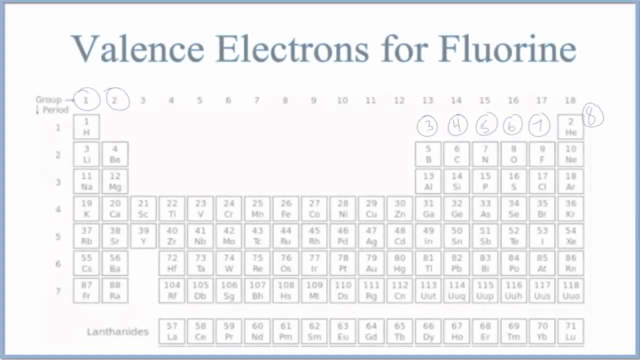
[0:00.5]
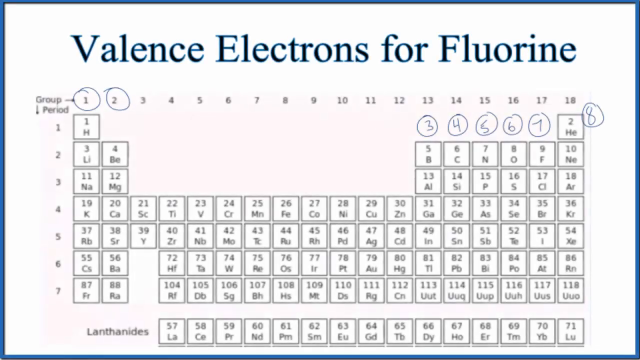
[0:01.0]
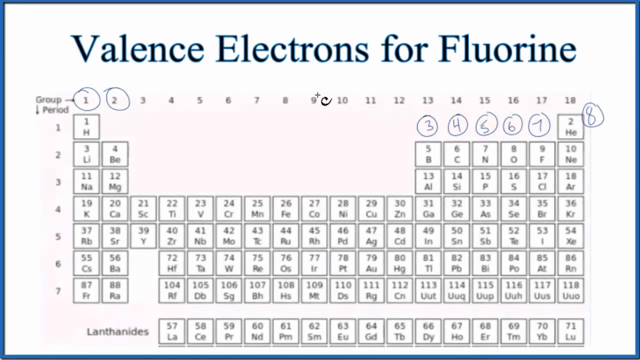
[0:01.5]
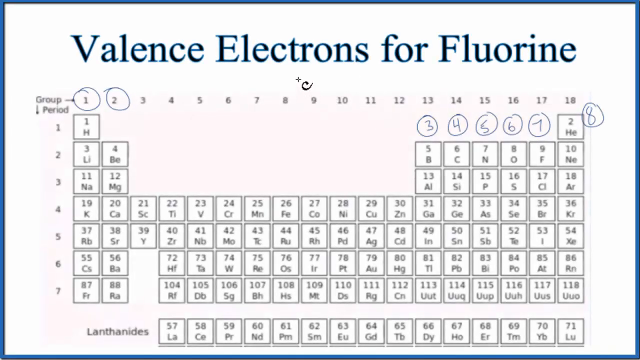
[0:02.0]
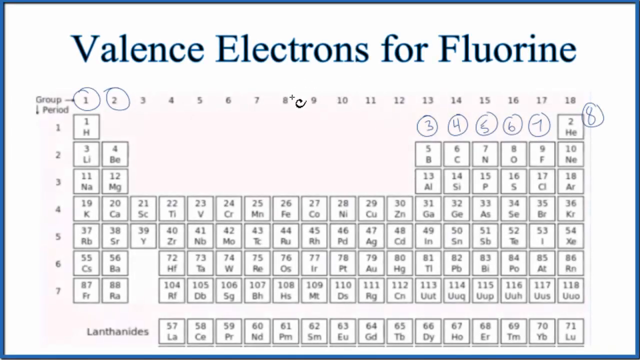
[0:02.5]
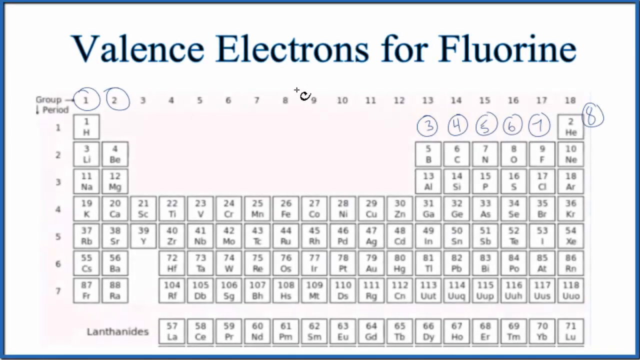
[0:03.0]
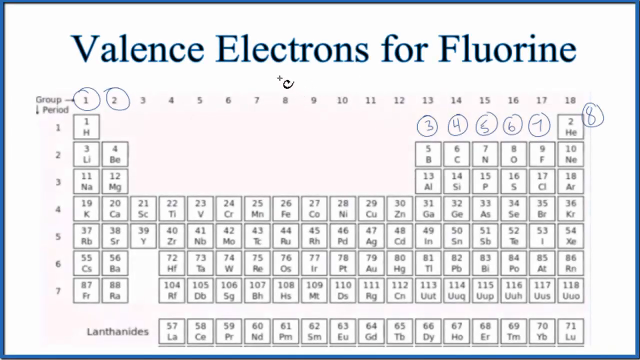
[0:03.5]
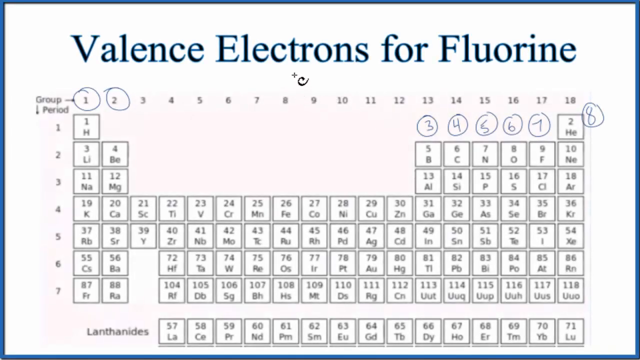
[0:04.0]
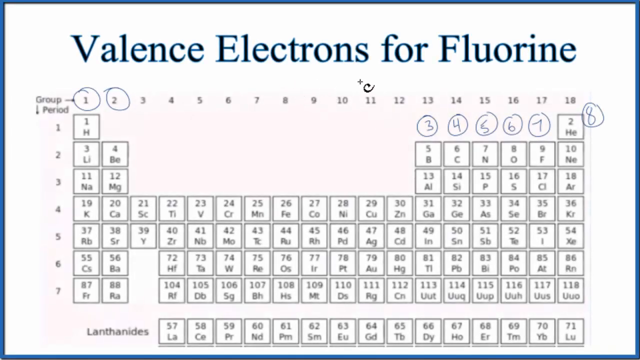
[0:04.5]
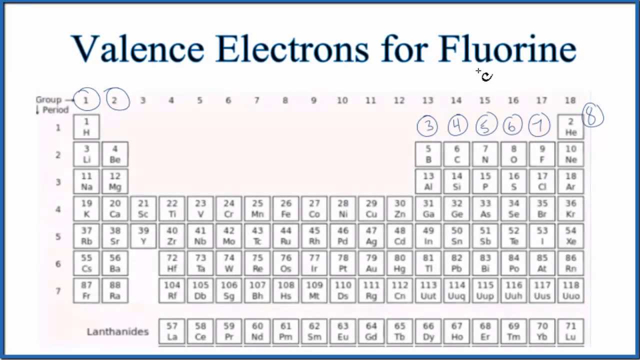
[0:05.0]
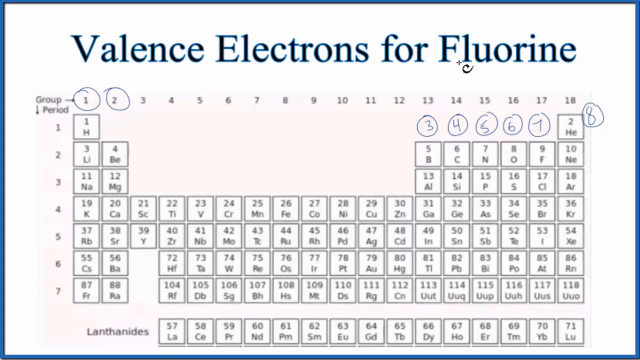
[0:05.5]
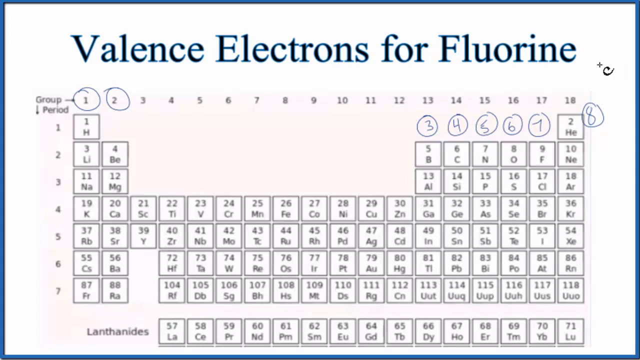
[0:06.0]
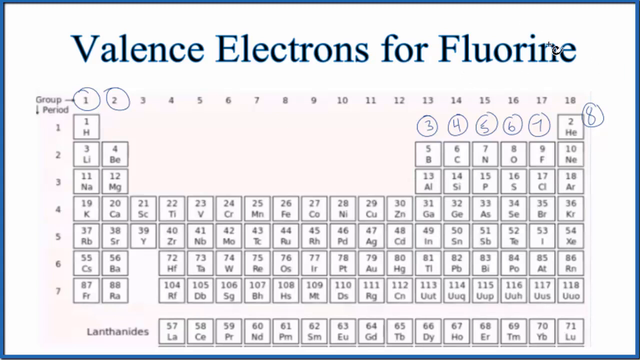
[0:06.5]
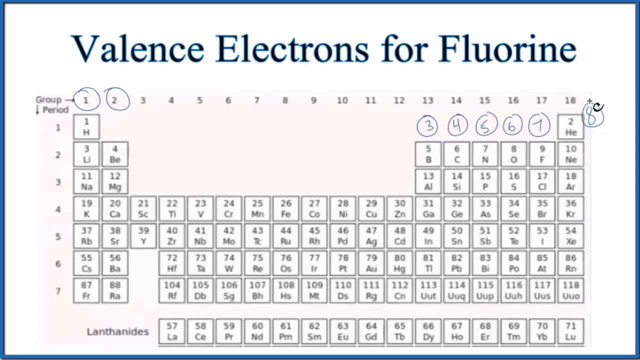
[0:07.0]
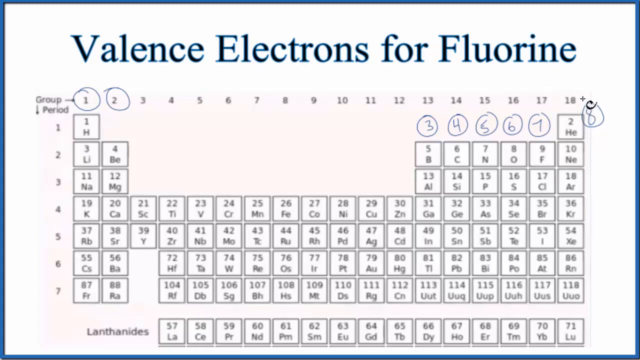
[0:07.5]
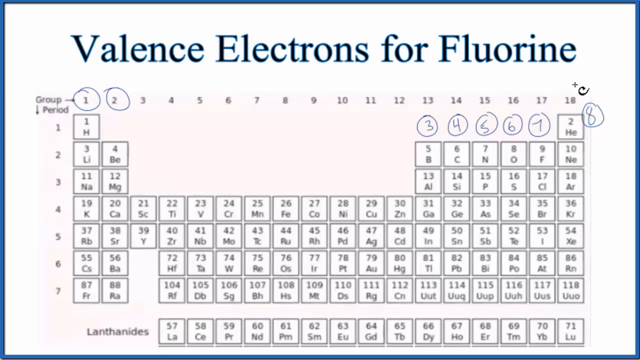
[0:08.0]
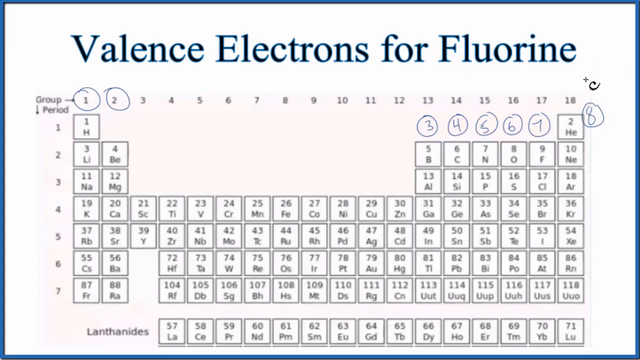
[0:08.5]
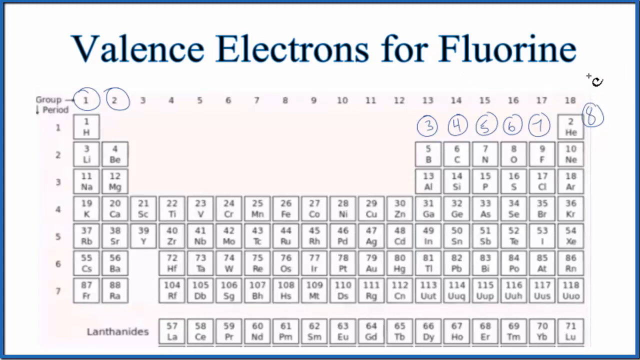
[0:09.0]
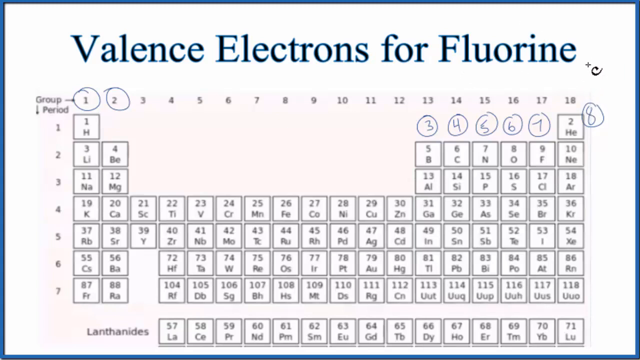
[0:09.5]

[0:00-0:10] The video opens with an overview of a periodic table titled "Valence electrons for fluorine." At the top of the screen is what appears to be a blank white chart, or a chart with a white background. Throughout this part, the presenter highlights the title by underlining it with the mouse. A variety of numbers are listed: the numbers one and two are circled in the very top left-hand corner, and in the very right-hand corner there are additional numbers that look like they were drawn by the instructor.